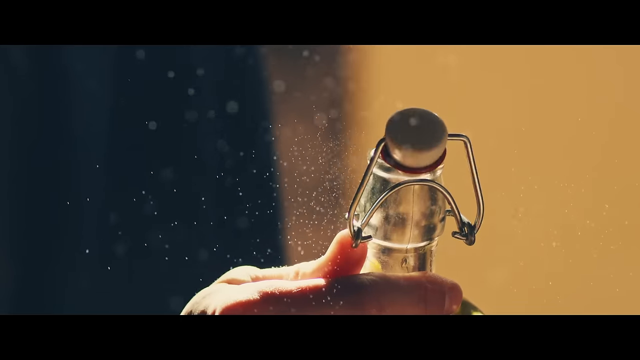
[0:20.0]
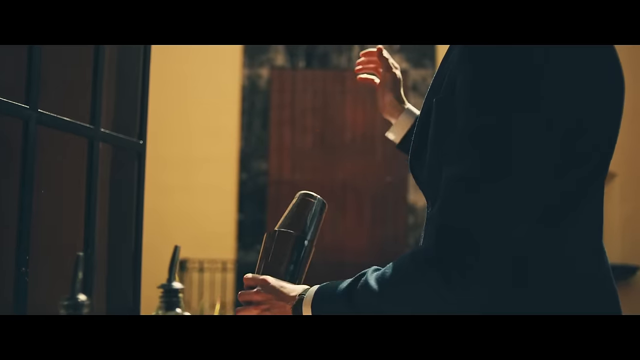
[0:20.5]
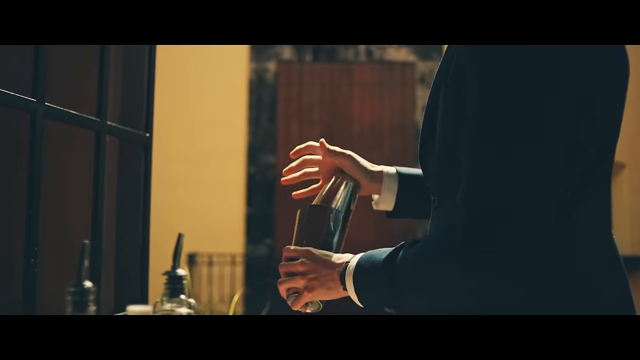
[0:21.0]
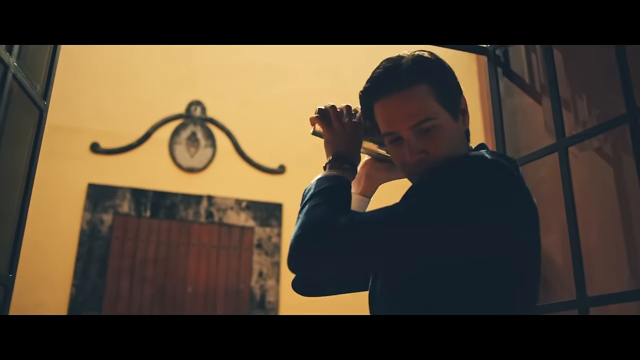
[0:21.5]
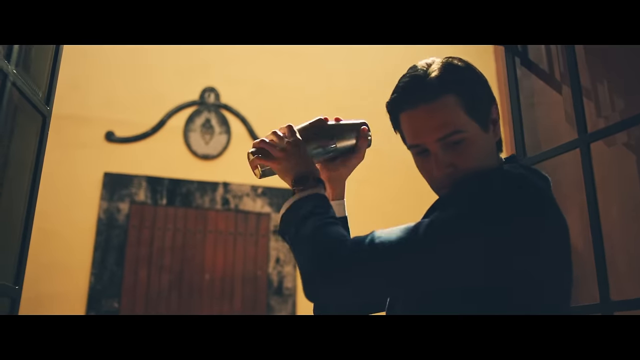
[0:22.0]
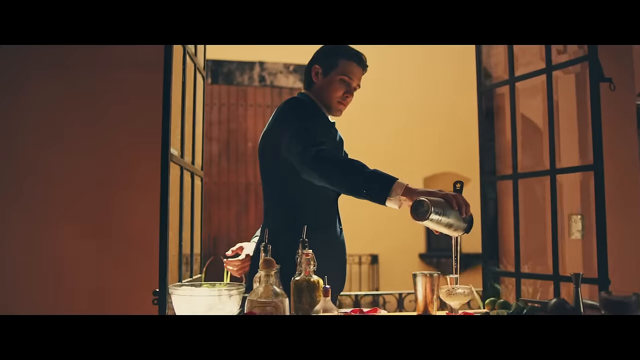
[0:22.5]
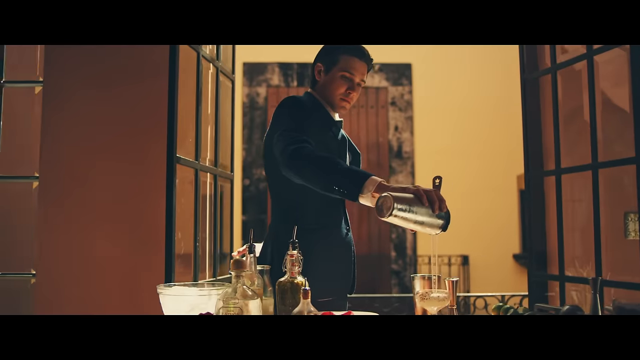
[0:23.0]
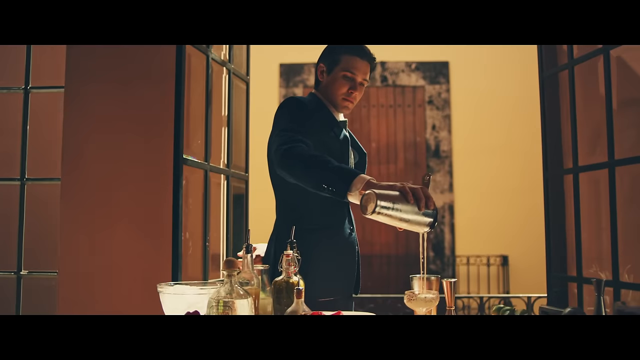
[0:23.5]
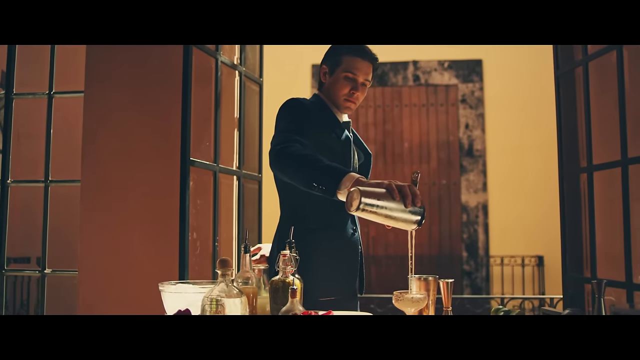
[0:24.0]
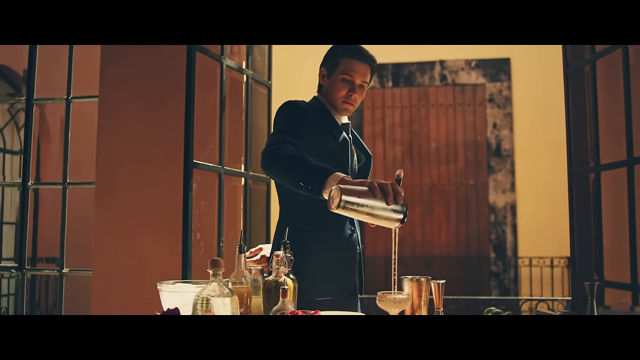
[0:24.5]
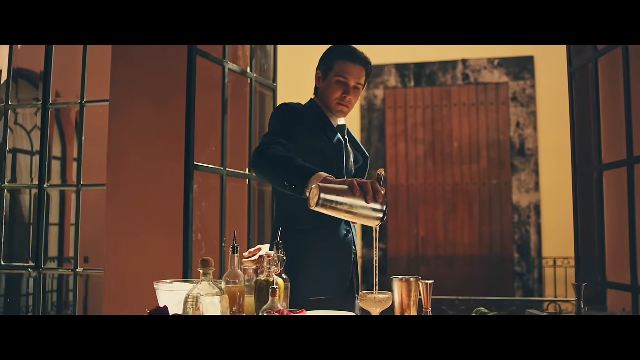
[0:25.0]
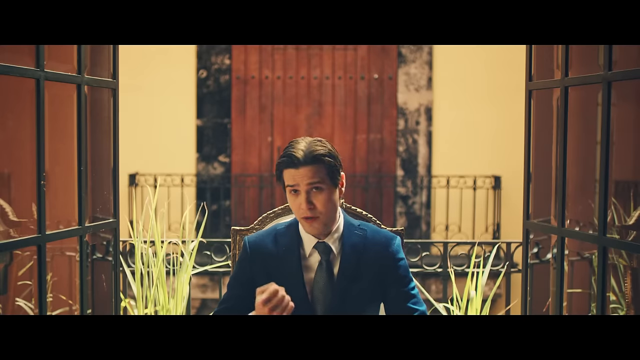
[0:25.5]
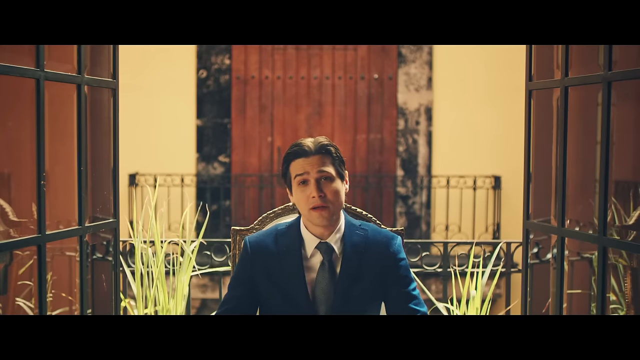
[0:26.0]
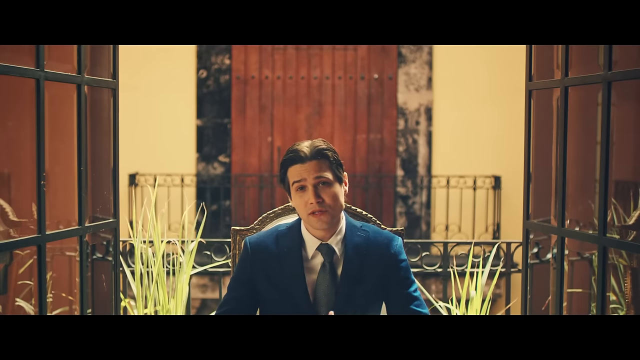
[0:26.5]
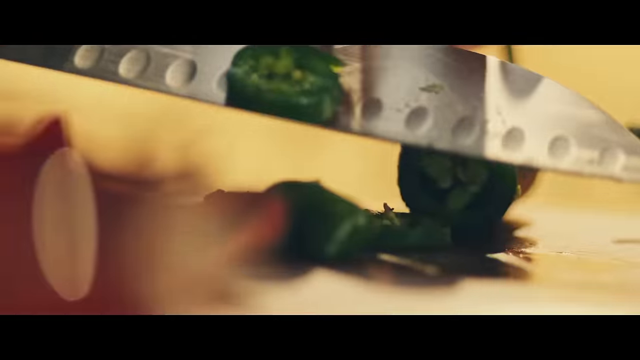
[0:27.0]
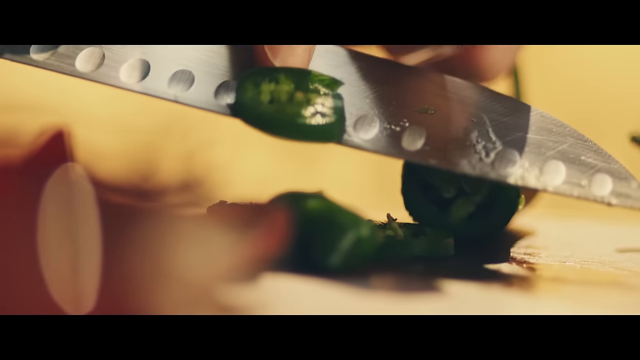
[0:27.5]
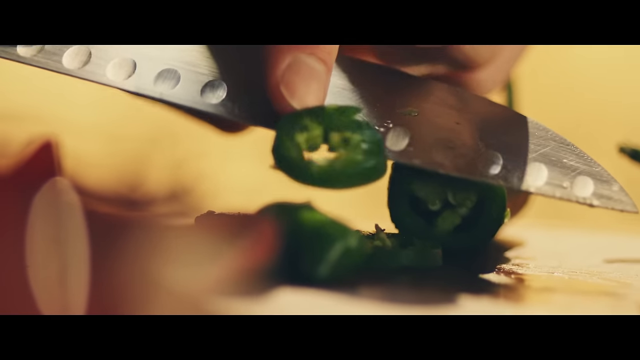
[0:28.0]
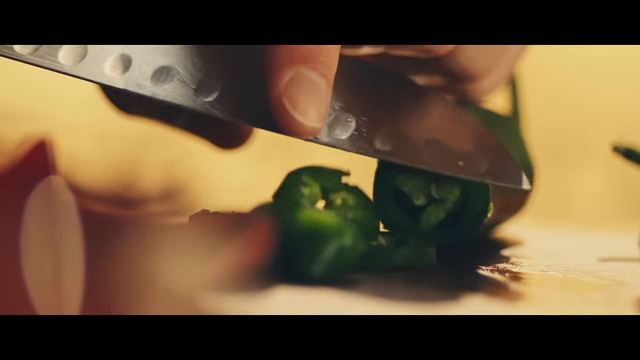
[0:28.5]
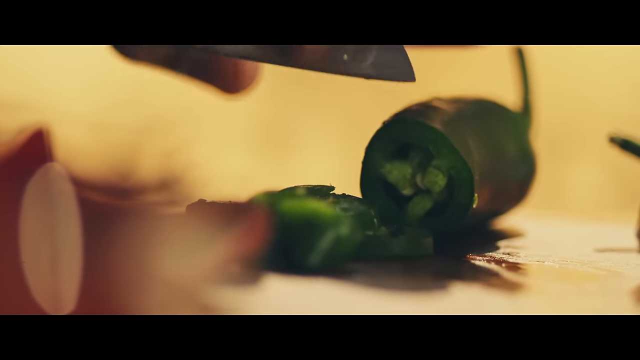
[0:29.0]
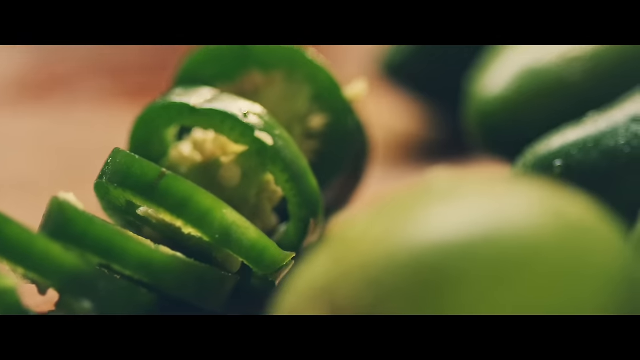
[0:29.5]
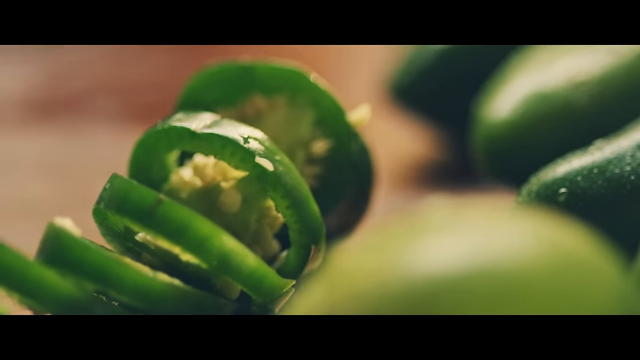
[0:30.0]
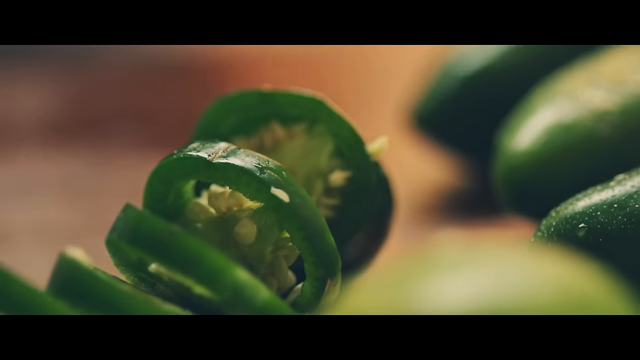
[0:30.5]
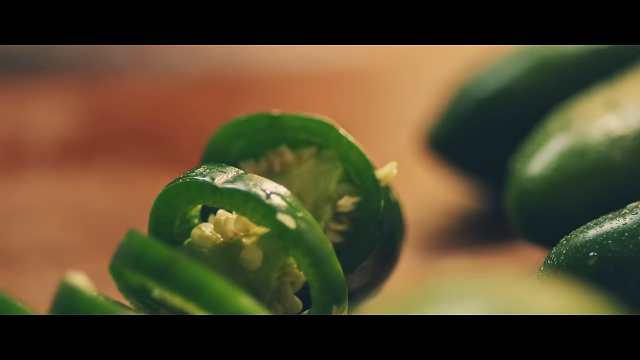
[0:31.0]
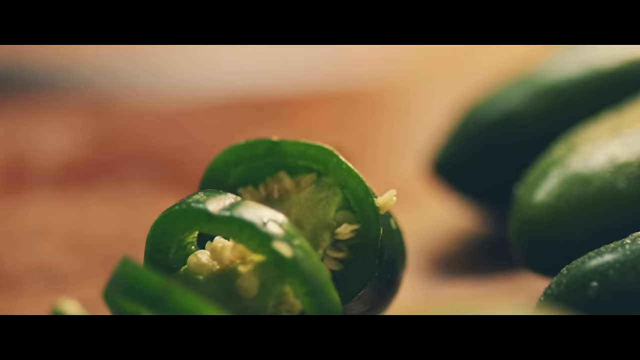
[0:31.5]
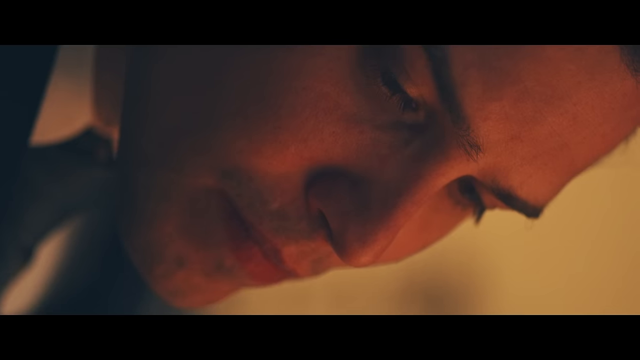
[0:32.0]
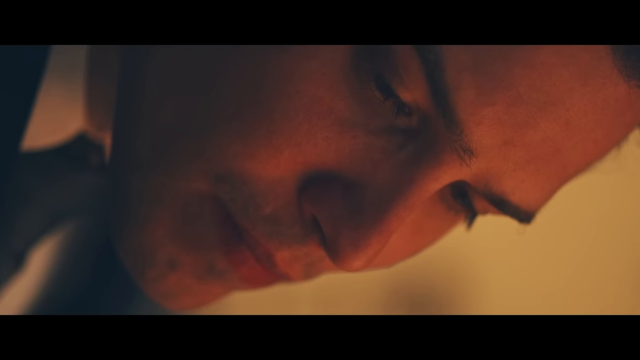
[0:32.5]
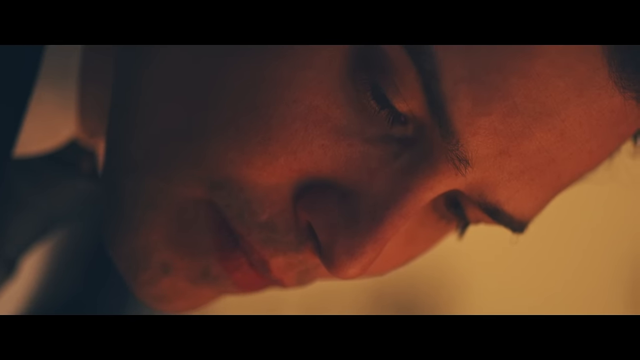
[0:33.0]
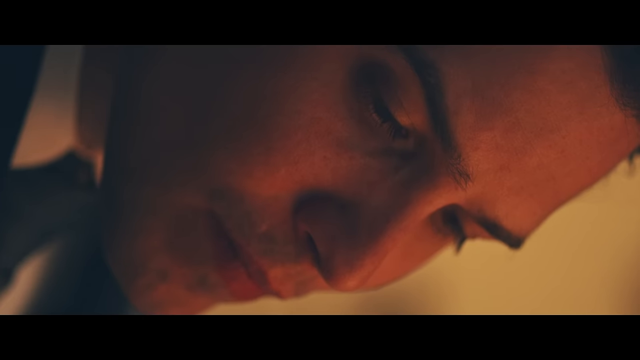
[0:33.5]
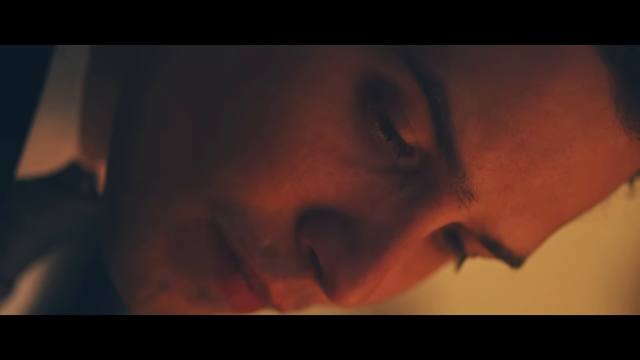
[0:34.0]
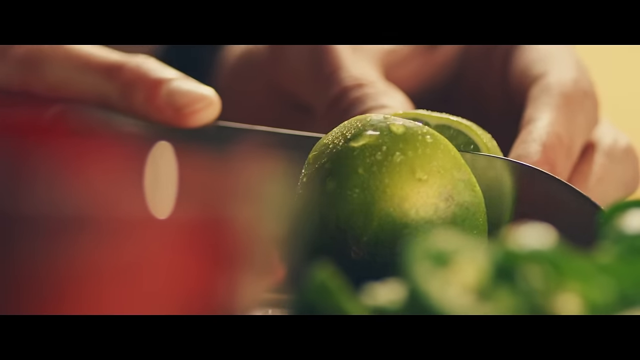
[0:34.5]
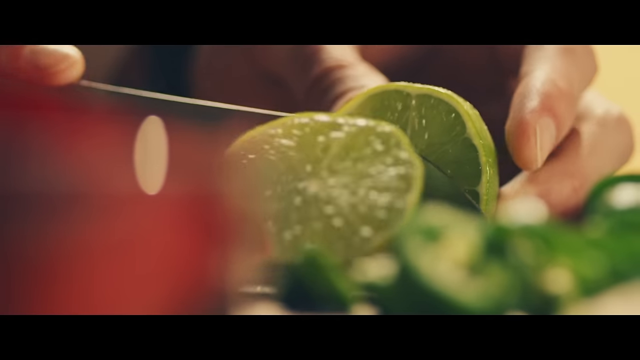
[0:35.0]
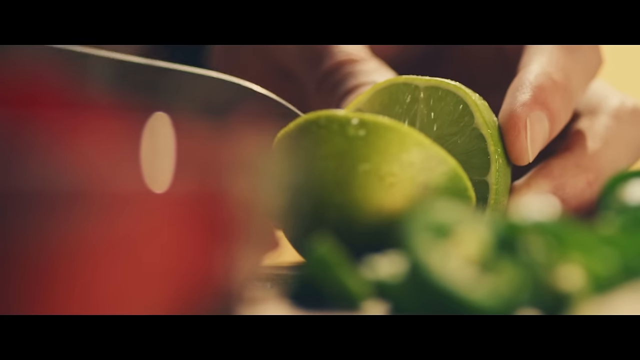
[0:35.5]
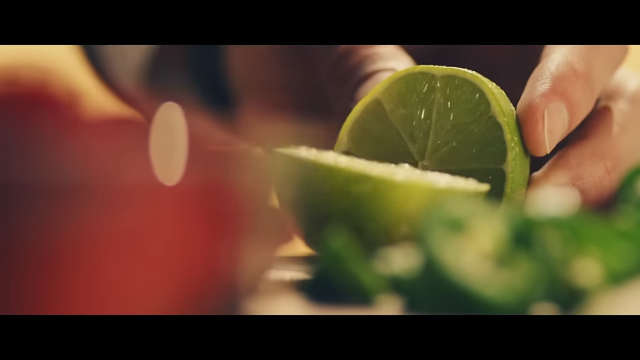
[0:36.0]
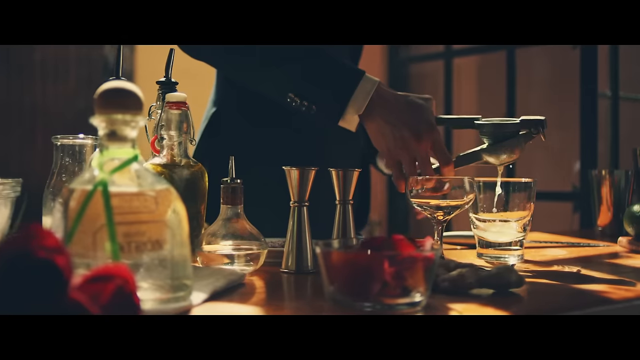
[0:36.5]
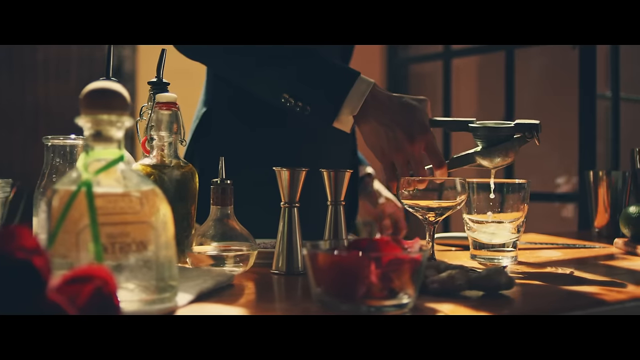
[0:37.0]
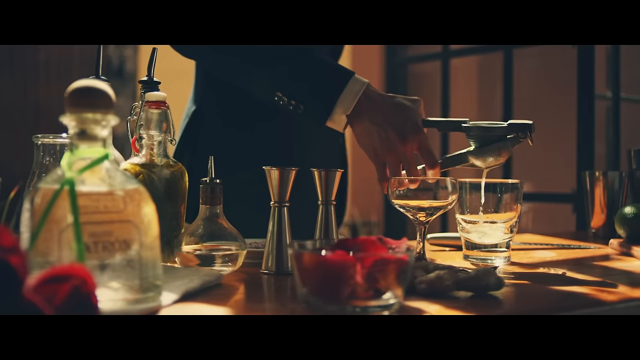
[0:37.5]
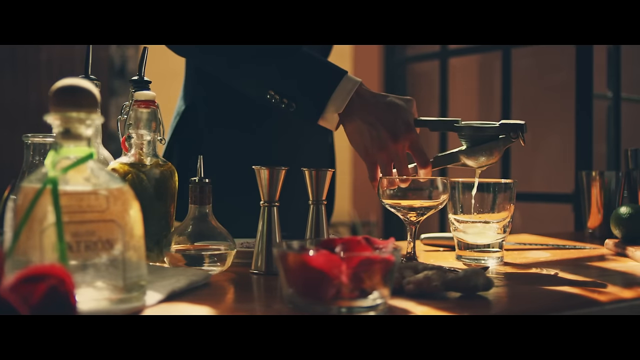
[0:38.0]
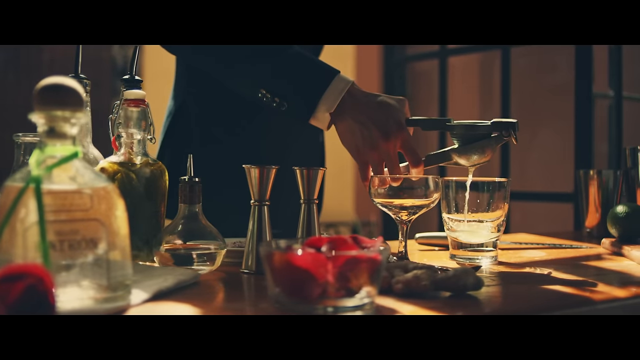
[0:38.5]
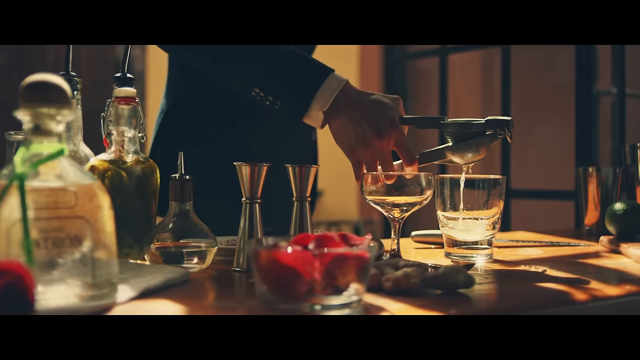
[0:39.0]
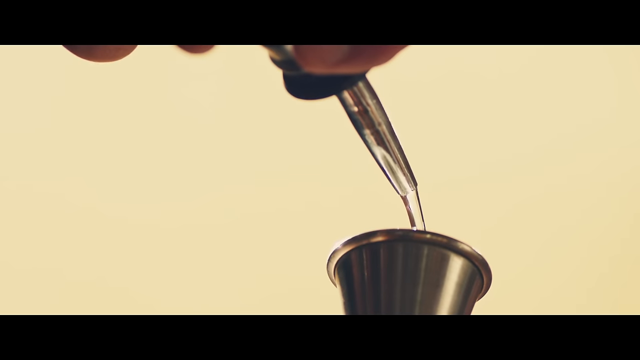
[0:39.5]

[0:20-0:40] The man opens a bottle of liquid and pours it into a shaker, then shakes the drink vigorously. He squeezes a juicy lime into the glass as well. He opens a bottle of simple syrup and pours the drink into a martini-type glass. He cuts jalapeño peppers into very thin slices that go on the drink. He pours all his ingredients into the glass with some ice and shakes the drink vigorously. The drink in the glass is cloudy white.